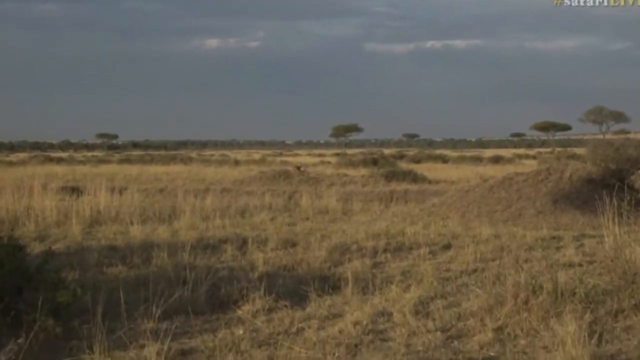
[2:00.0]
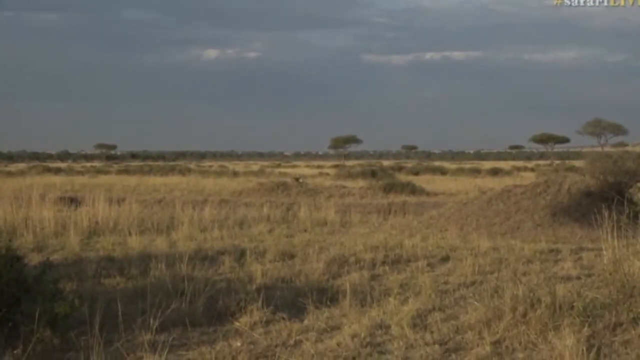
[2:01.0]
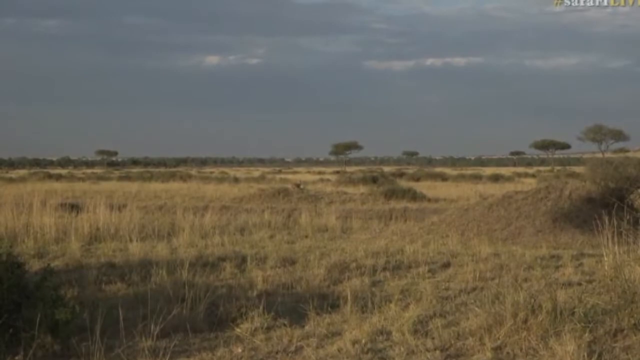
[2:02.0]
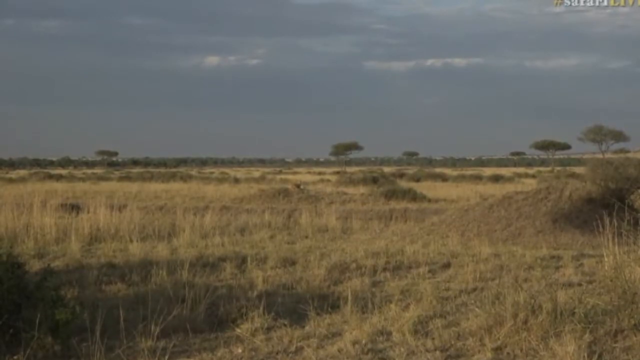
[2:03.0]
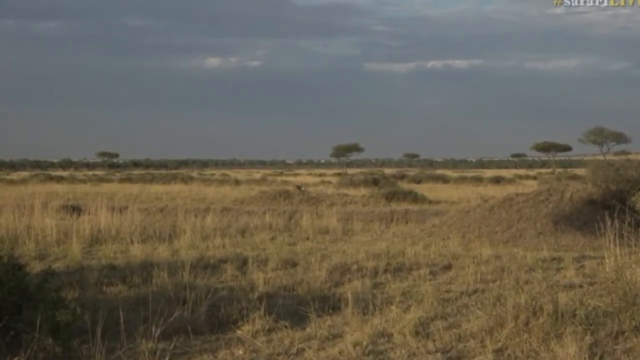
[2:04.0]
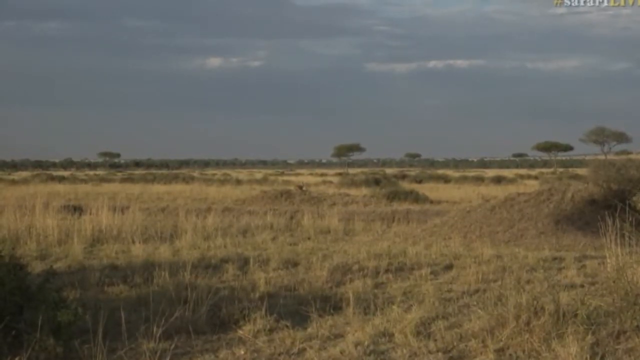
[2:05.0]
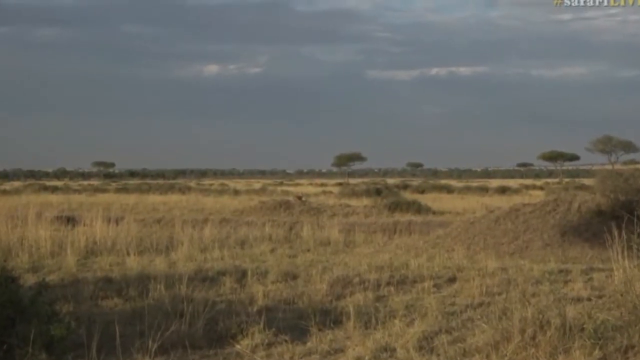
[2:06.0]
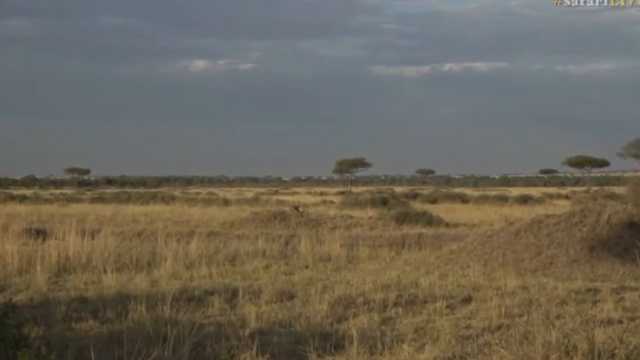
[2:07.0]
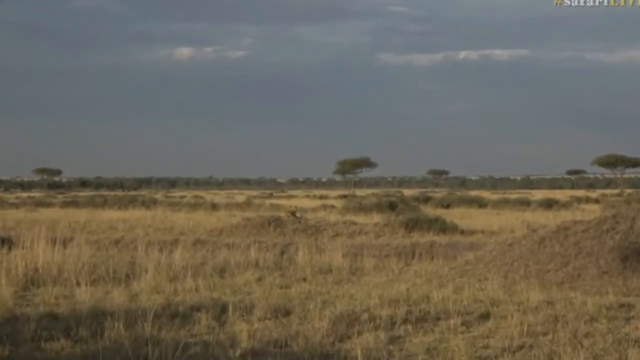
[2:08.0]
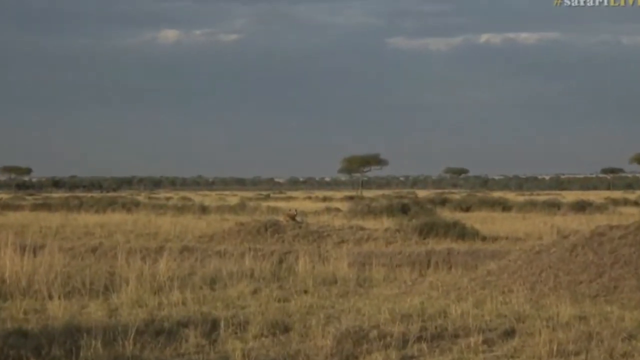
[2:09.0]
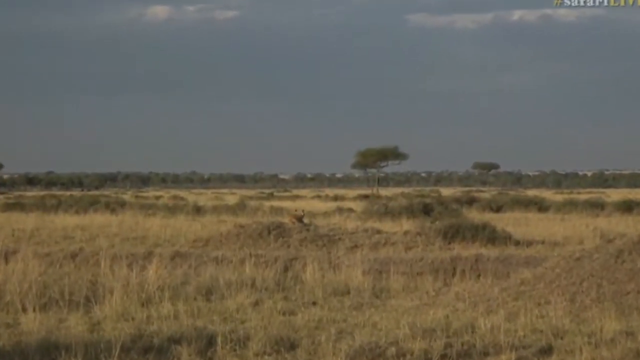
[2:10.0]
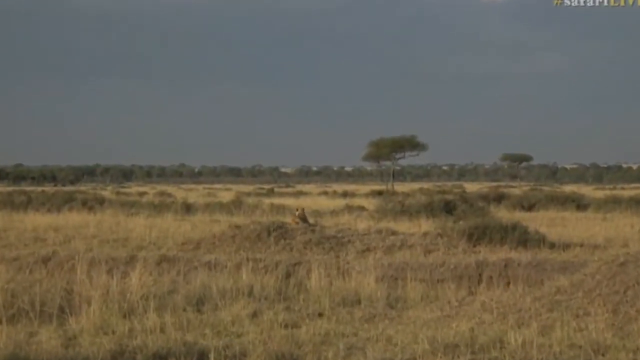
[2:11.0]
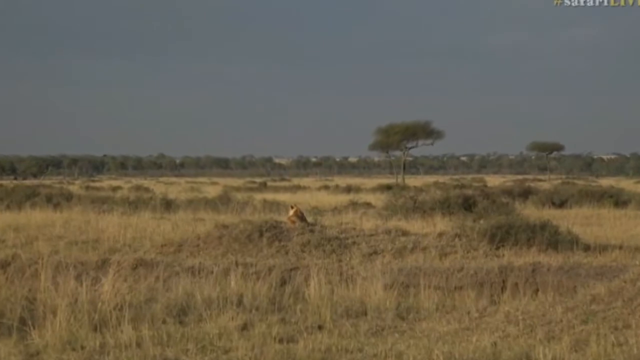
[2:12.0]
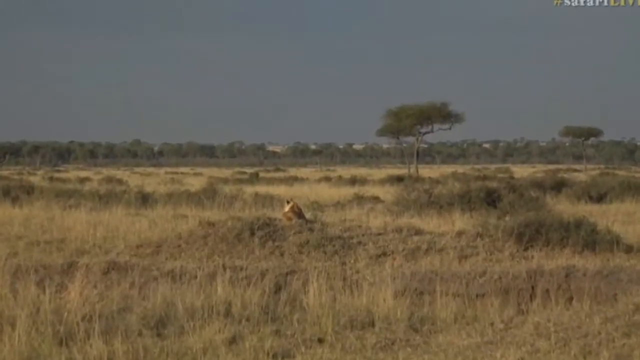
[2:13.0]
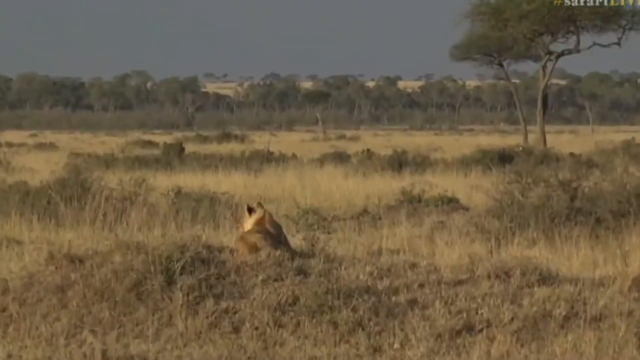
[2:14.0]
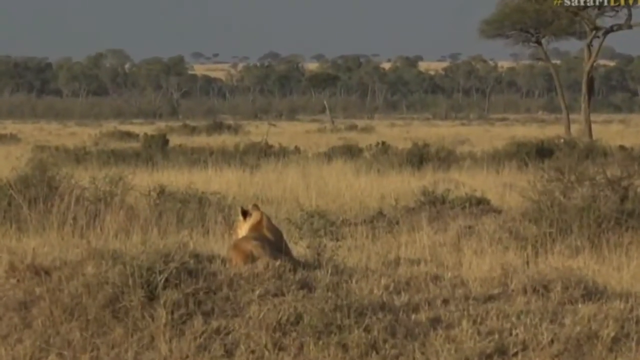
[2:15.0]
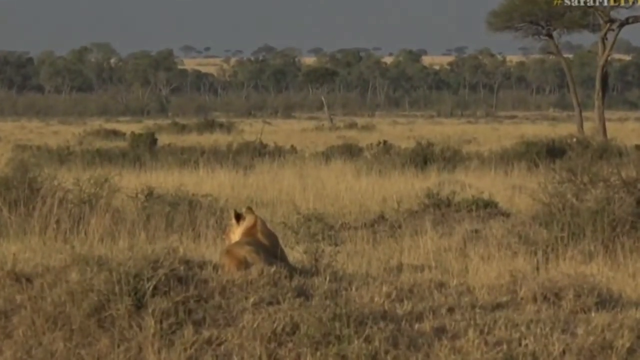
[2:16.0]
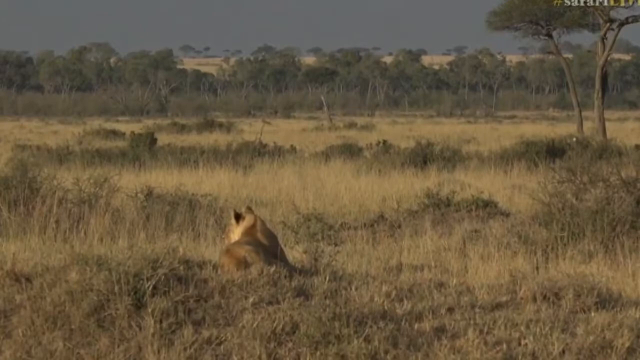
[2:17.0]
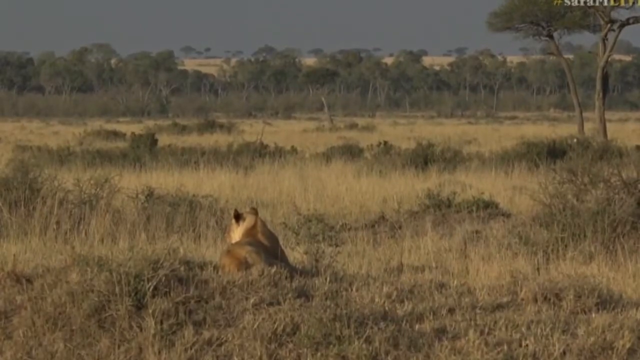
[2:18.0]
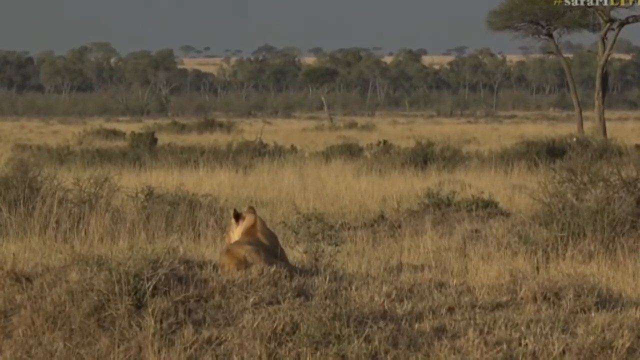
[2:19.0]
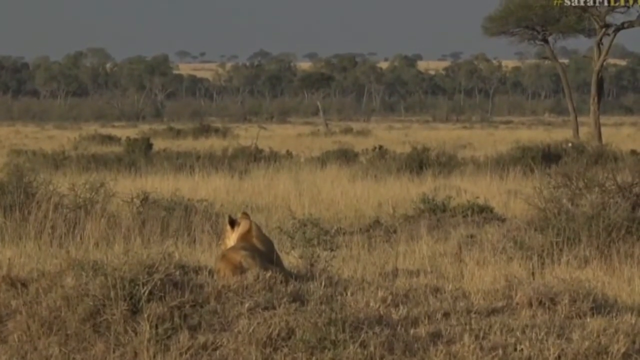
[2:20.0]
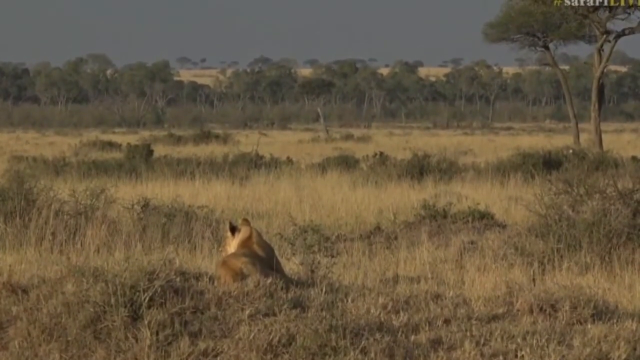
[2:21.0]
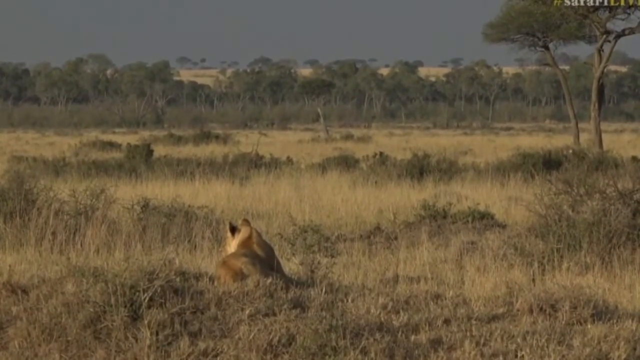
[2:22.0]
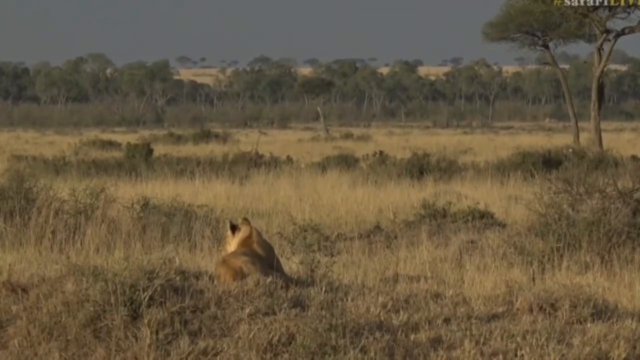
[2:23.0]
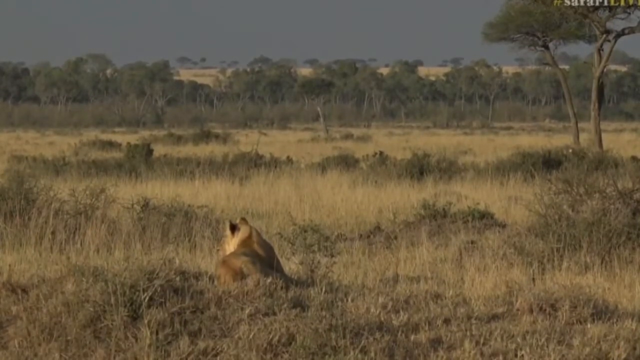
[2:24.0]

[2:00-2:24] The sky is almost entirely one piece of cloud with no separation. The horizon looks like a line of trees, and there are also trees nearby, with an expansive view of land as far as the eye can see. The weeds and brush are dry, and it looks dry. The word "Safari" is in the upper right corner. A brown adult lioness sits on top of a dirt mound that is slightly above the rest of the land, resting and scanning the area from left to right. The camera pans in fairly close. Apparently the woman who was driving the Jeep got out to photograph the lioness. The scene looks like the Serengeti, with no structures, just land, brush, weeds and trees.